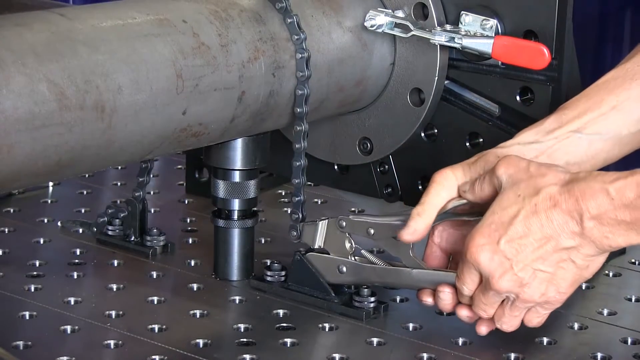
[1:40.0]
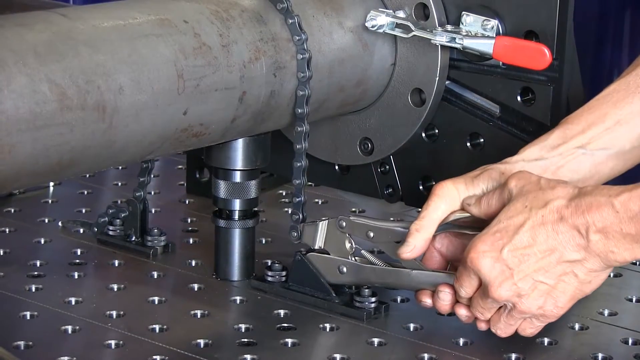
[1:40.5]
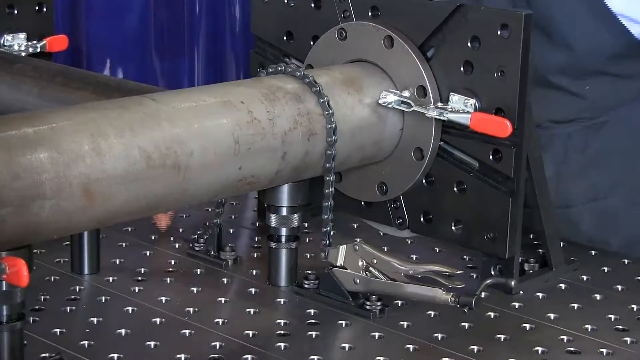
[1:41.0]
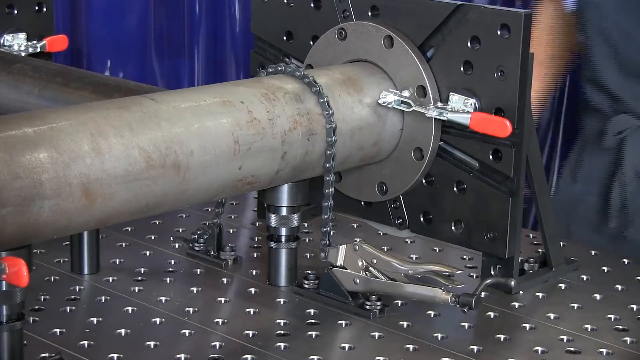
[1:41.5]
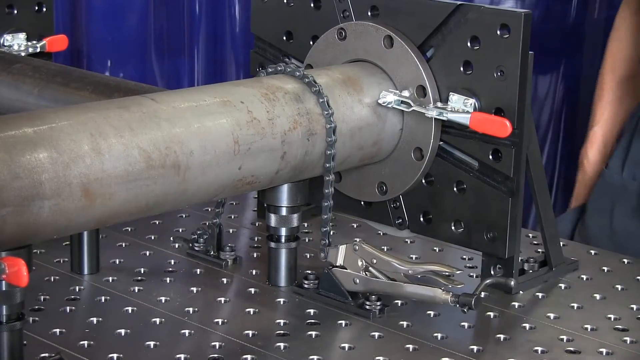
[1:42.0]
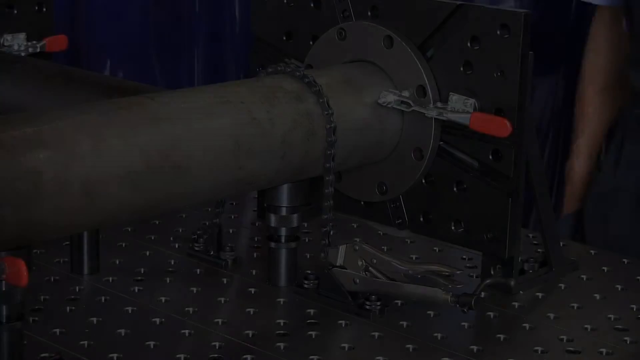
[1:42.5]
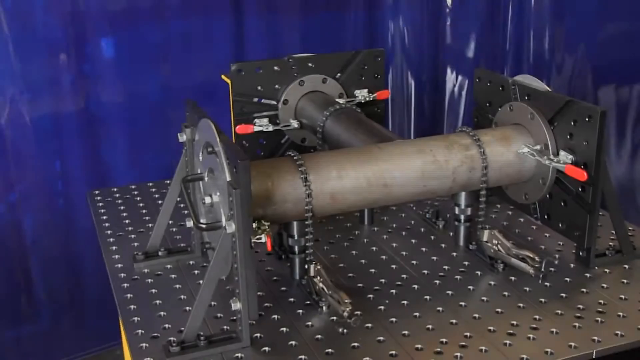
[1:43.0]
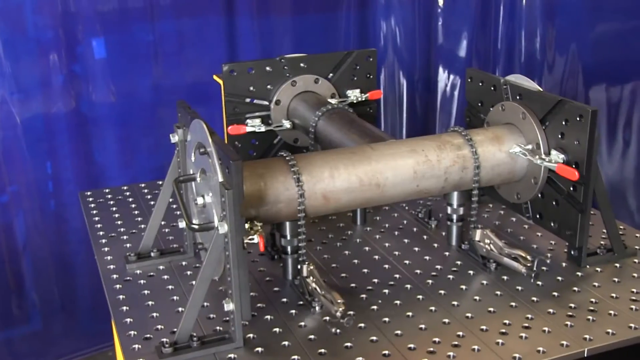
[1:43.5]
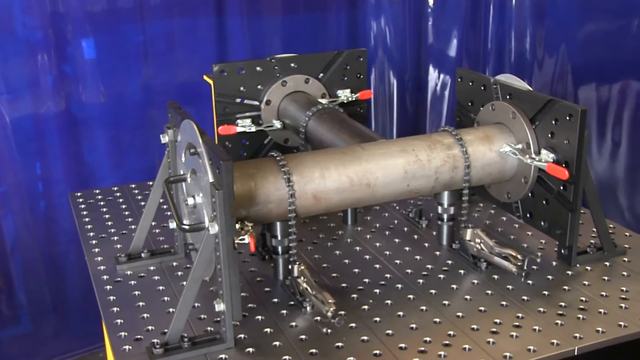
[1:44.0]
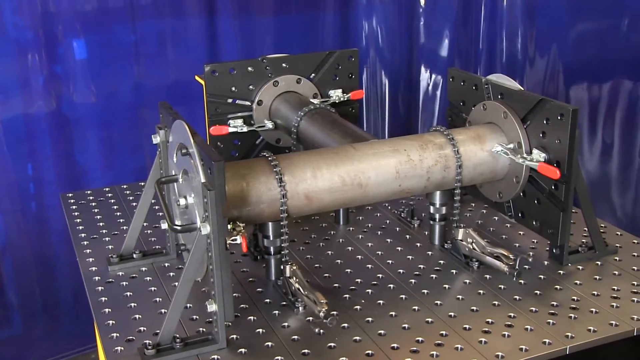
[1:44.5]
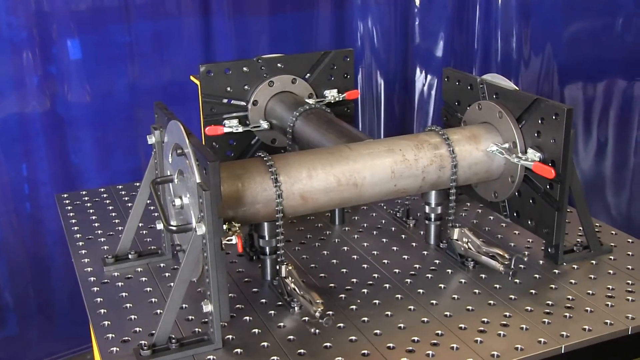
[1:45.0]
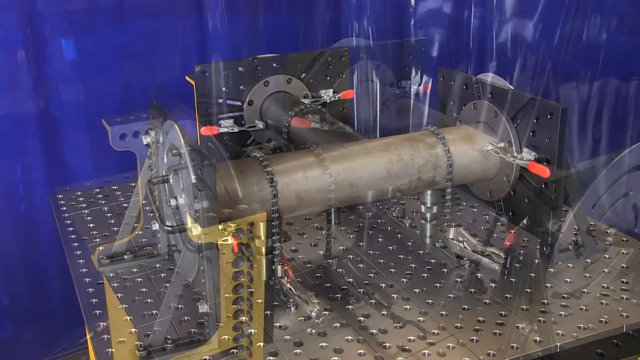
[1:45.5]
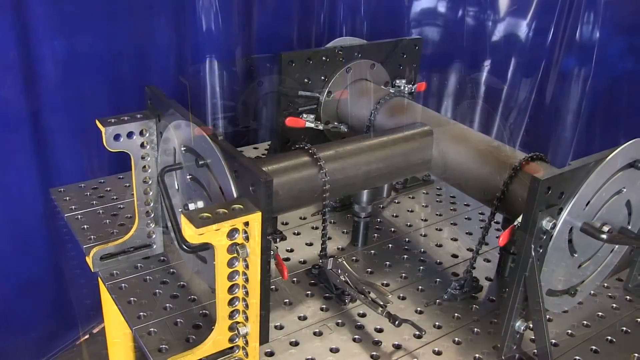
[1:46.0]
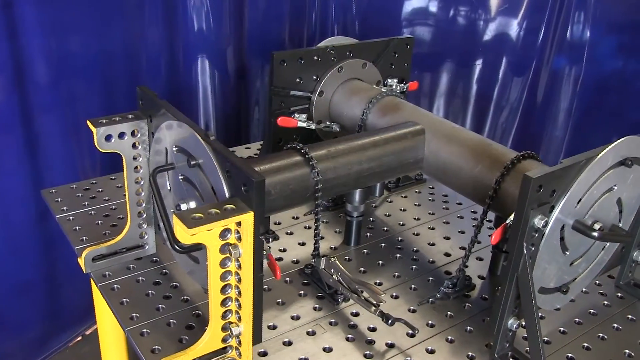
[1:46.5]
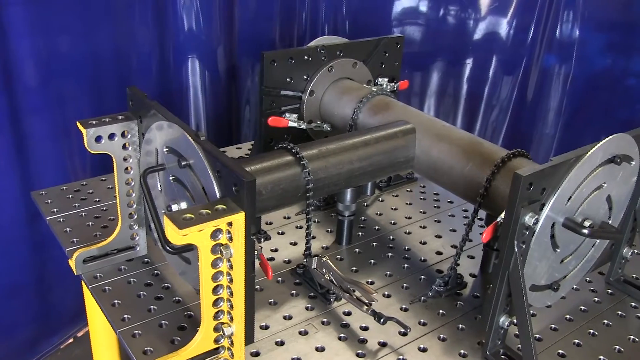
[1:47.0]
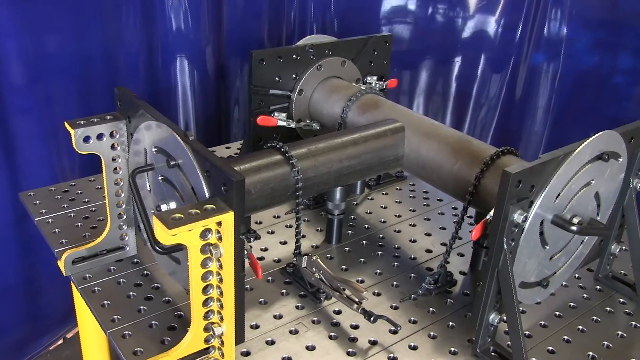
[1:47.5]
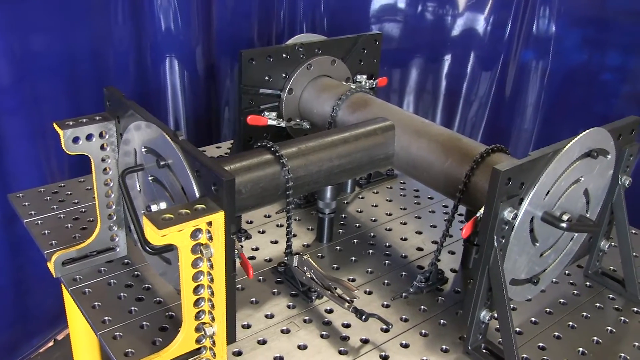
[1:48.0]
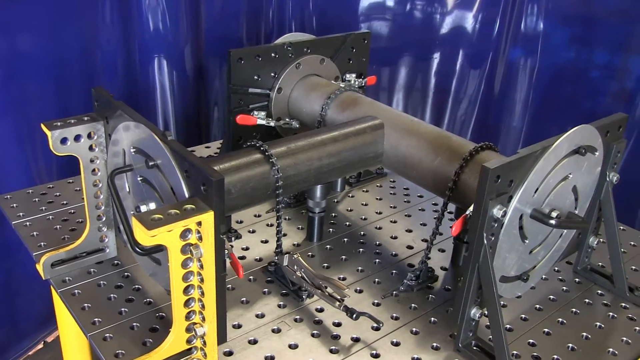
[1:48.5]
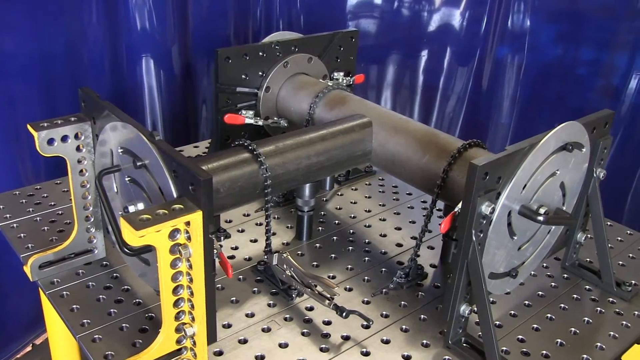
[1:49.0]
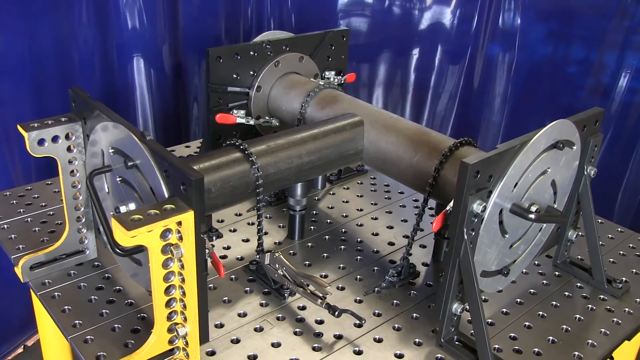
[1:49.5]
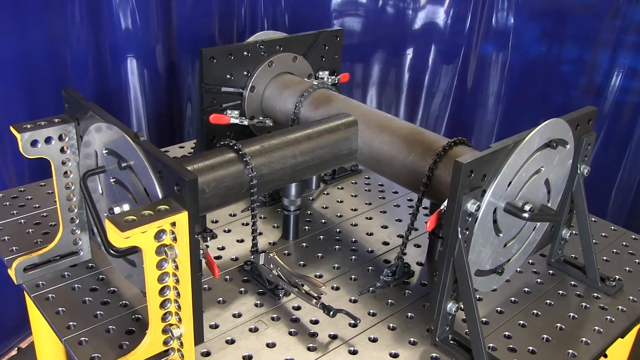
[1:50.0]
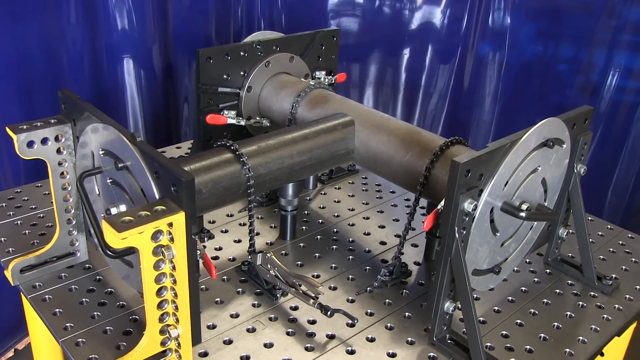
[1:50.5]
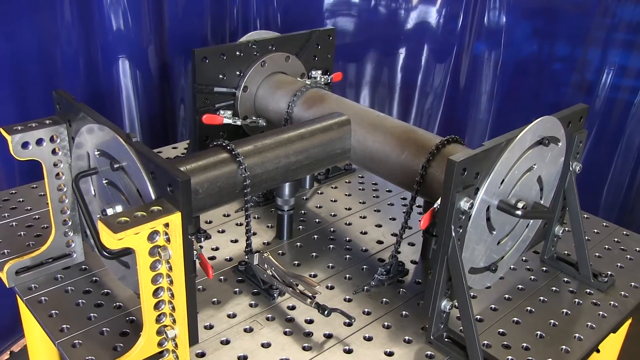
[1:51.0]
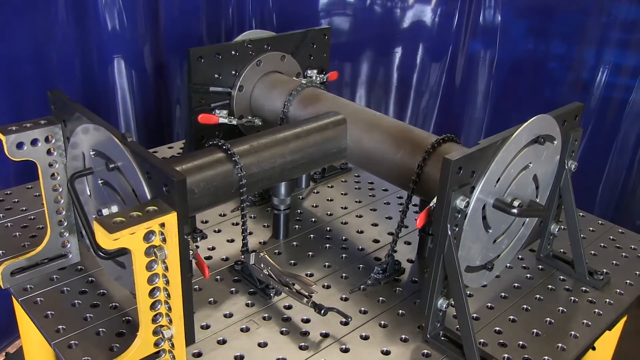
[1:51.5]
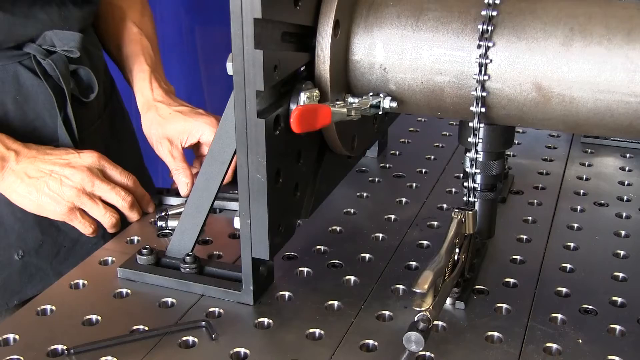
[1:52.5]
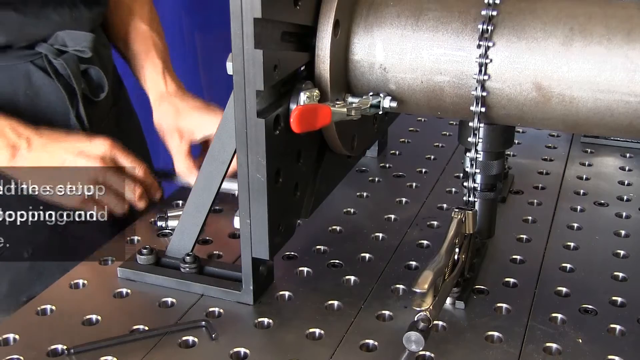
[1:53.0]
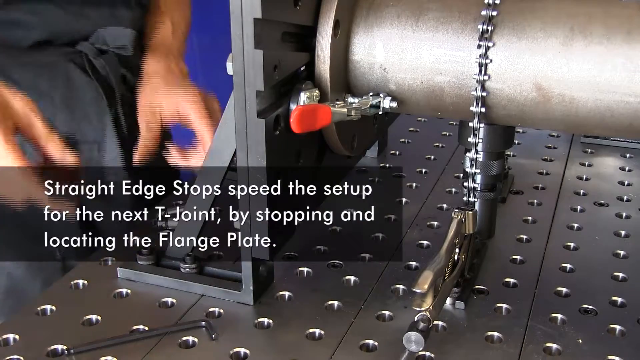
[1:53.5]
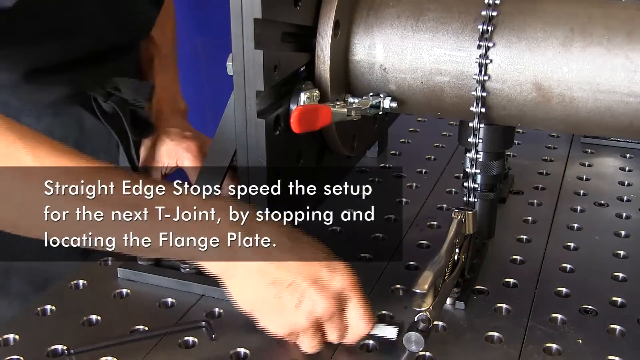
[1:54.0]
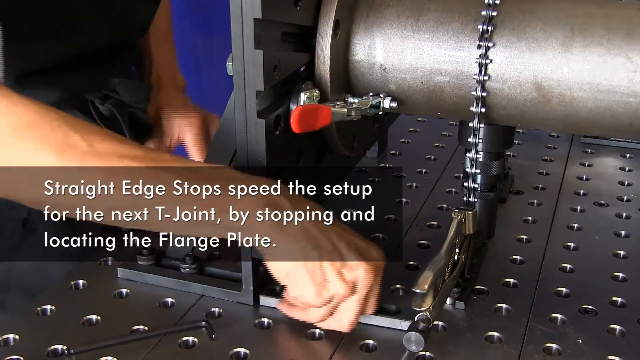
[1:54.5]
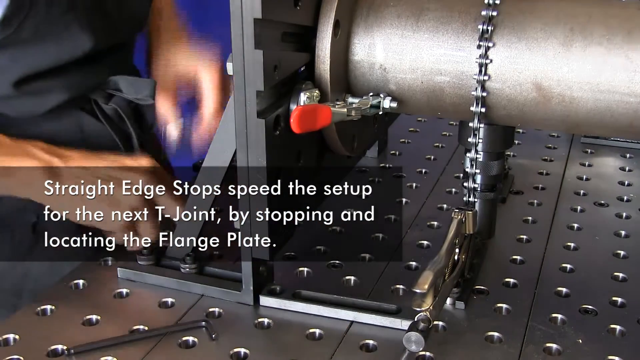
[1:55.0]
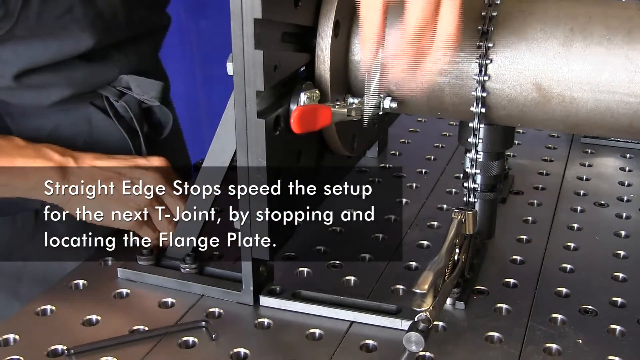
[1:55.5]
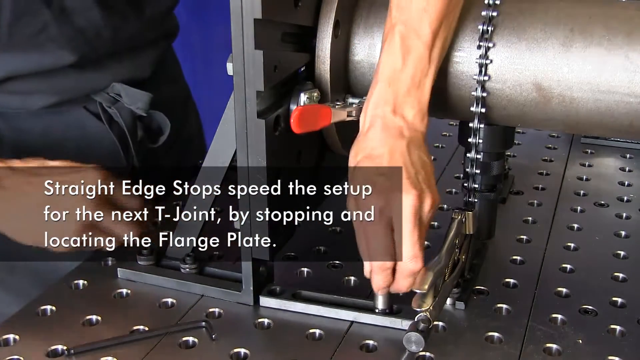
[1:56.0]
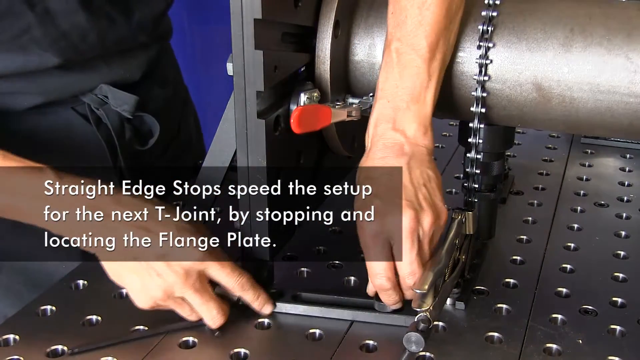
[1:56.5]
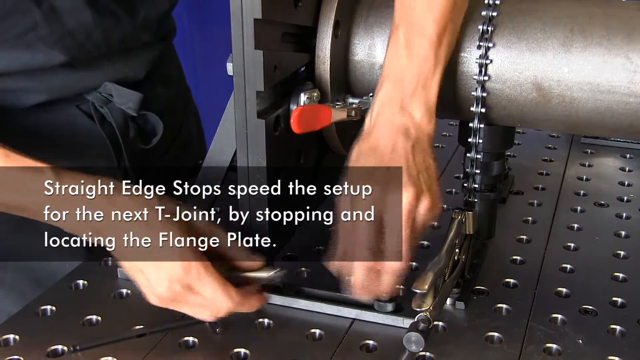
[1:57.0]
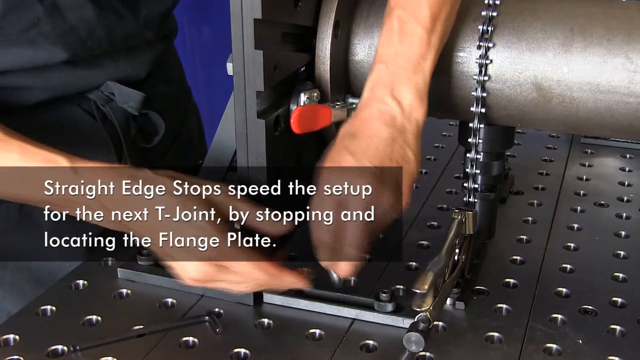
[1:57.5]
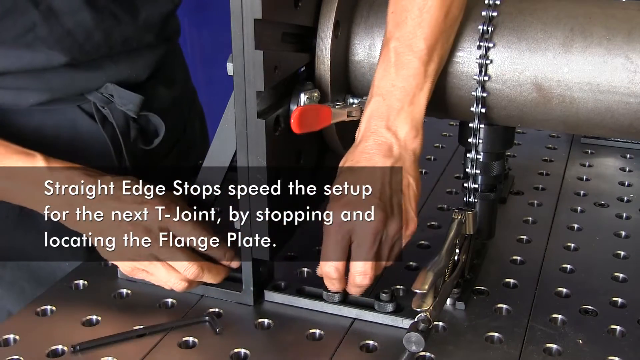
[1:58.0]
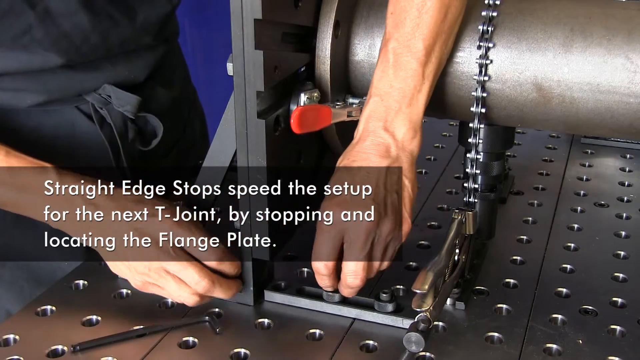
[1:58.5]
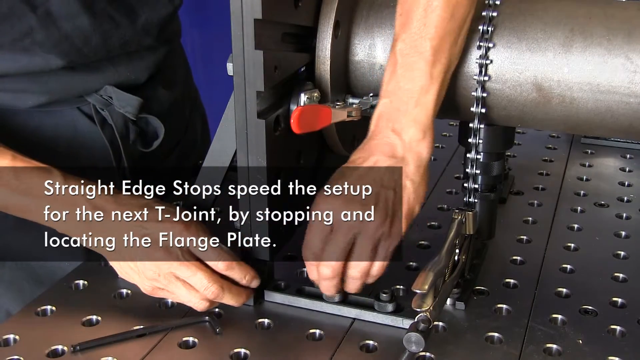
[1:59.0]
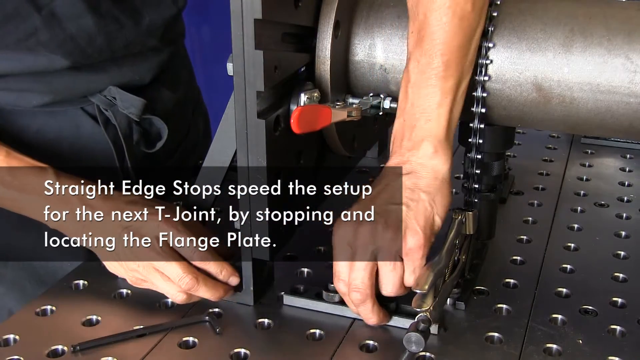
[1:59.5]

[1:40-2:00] A person's hands are on a silver tool that squeezes together chains wrapped around the ends of the pipes; the chains are attached to metal on the table. A caption says "straight edge stop speed the setup for the next t-joint by stopping and locating the flange plate." The person in the apron works on the end where a circular metal piece is lined up to the end of the pipe, adjusting the fittings there. An overall view of the pipe shows three circles: one at each end of the original pipe and one at the end of the added pipe that meets the original to form a T. The person has stepped back, still wearing the apron. The project looks almost complete.